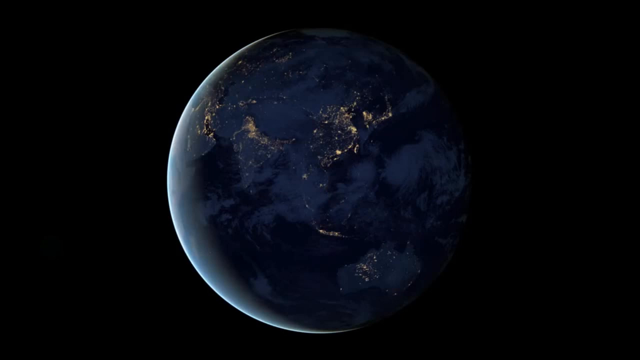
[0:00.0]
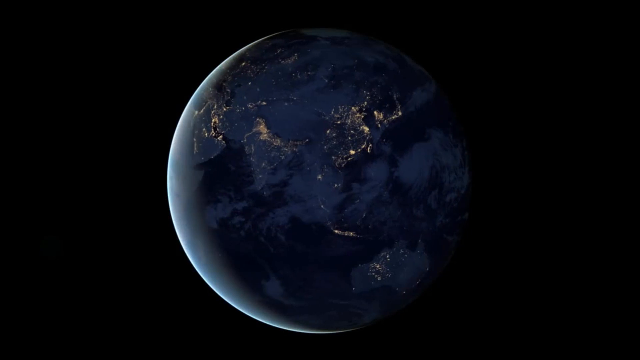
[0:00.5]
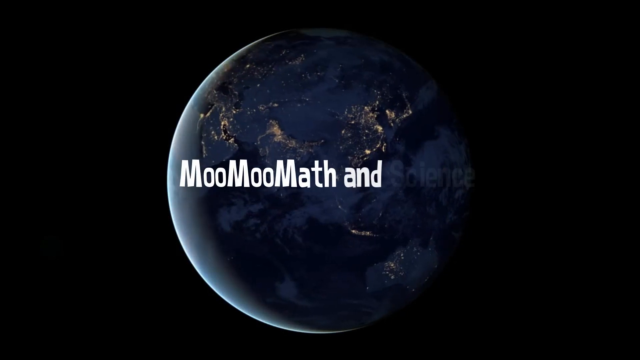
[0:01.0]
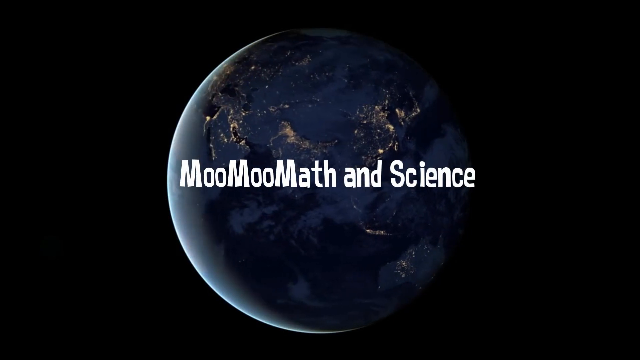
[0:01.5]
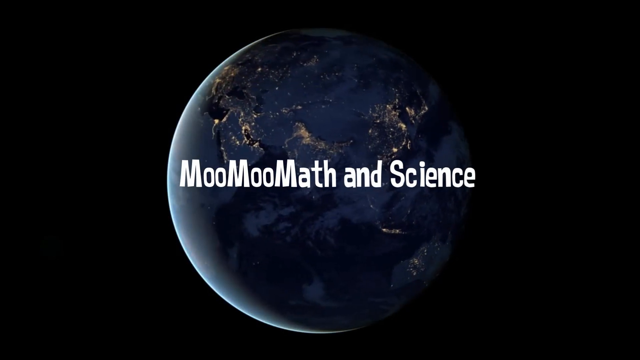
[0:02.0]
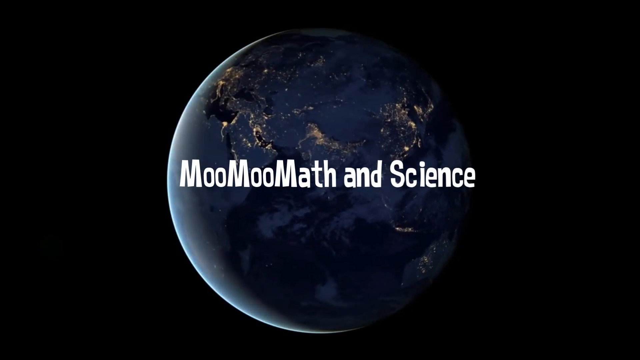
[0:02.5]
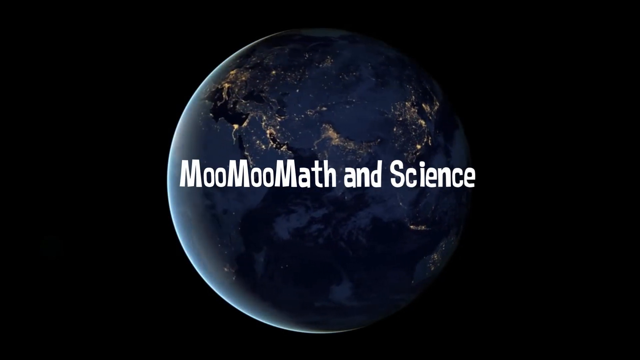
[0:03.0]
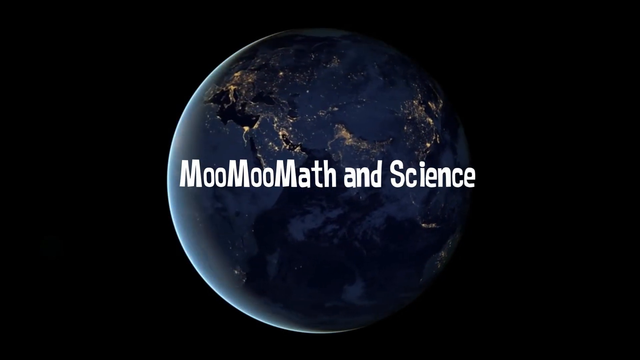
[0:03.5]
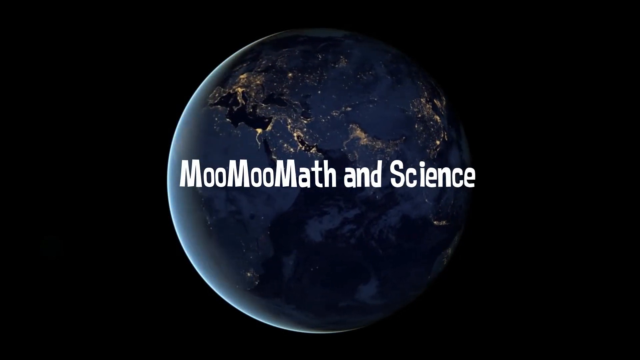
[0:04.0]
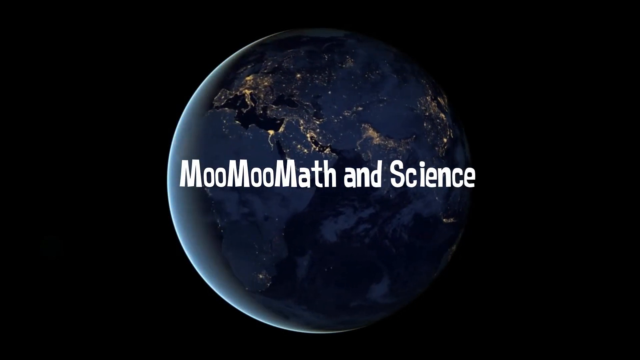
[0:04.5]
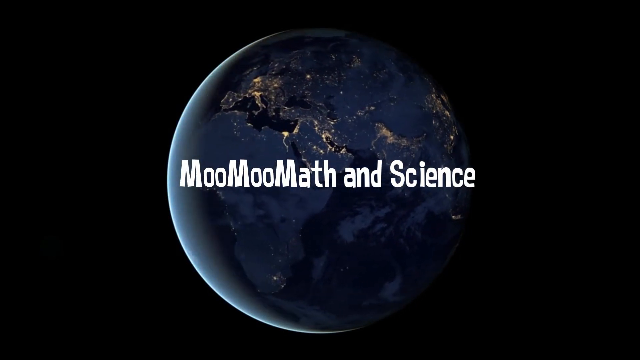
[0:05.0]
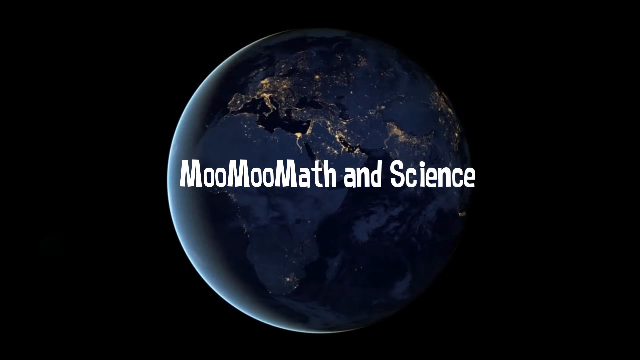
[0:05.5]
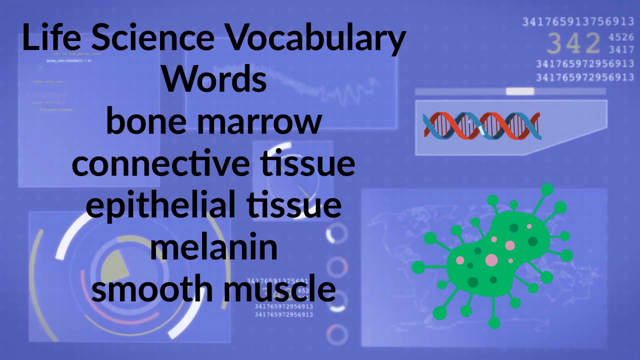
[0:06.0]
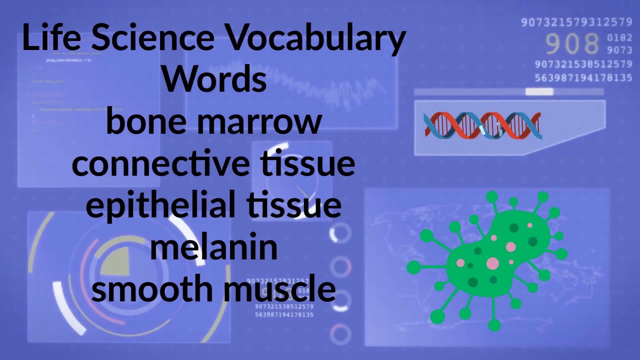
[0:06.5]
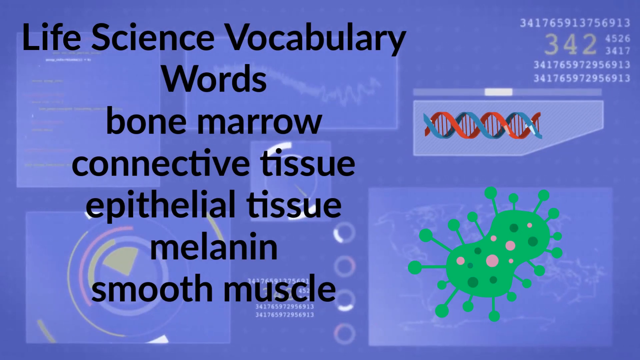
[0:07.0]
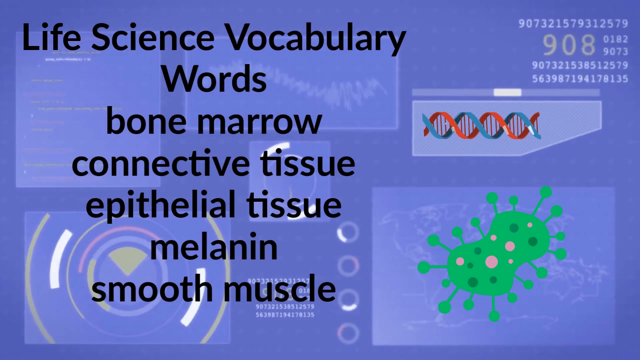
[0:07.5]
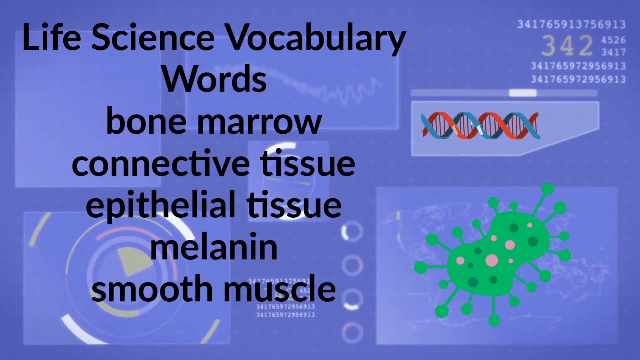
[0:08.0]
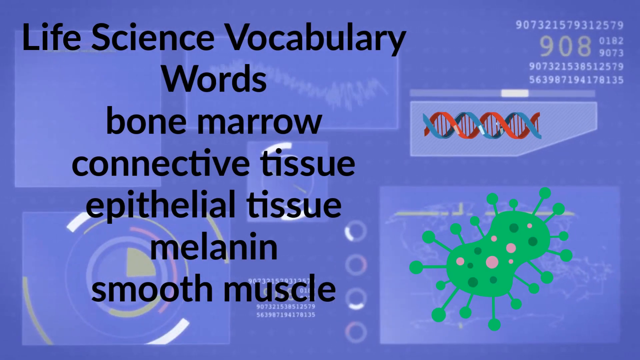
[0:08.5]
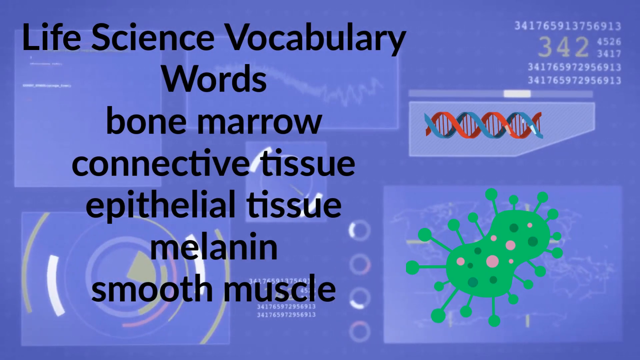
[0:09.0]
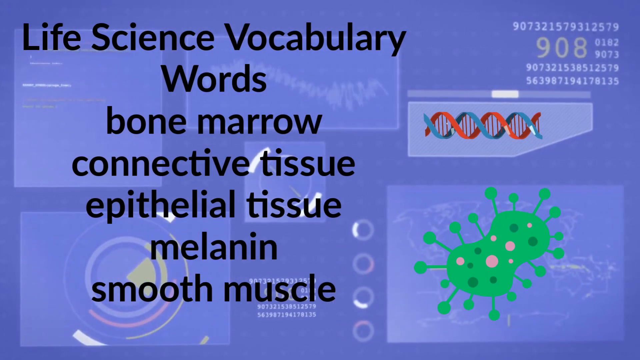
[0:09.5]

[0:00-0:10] Earth rotates in space against a completely dark background. In the center is the title "Mu Mu Math and Science". The video then transitions to a page titled "life science vocabulary words" that lists bone marrow, connective tissue, epithelial tissue, melanin, and smooth muscle. In the background are cartoon drawings of scientific things, such as a DNA double helix and a green cartoon bacterium, along with random numbers, graphs, and plots.